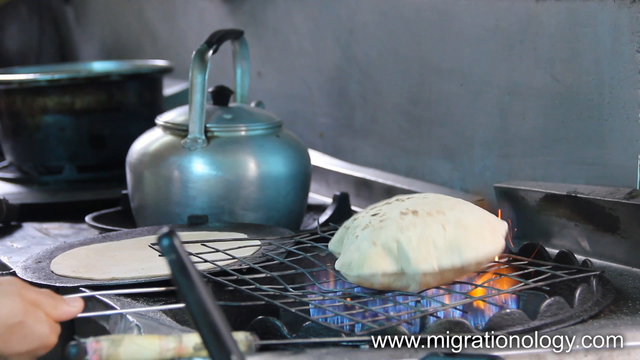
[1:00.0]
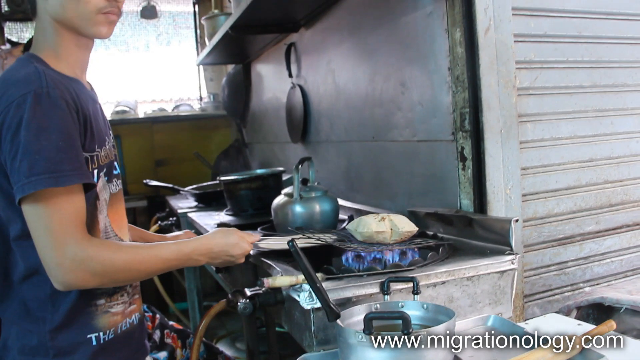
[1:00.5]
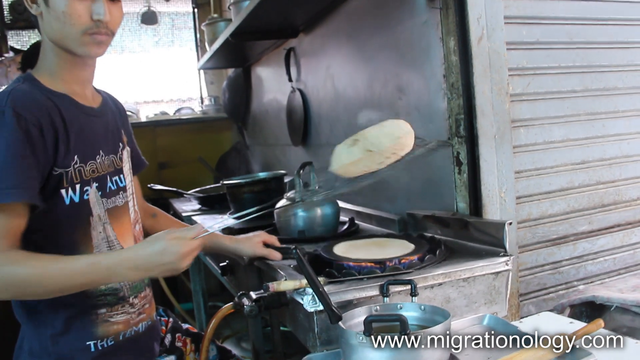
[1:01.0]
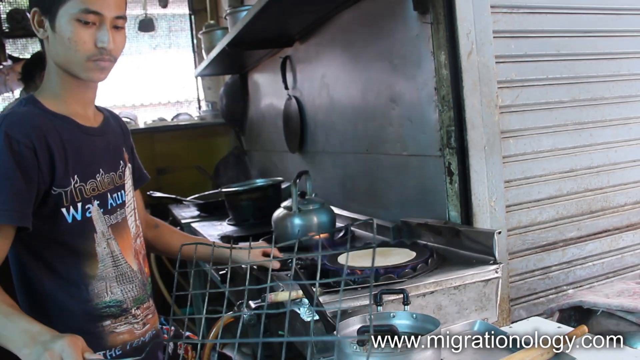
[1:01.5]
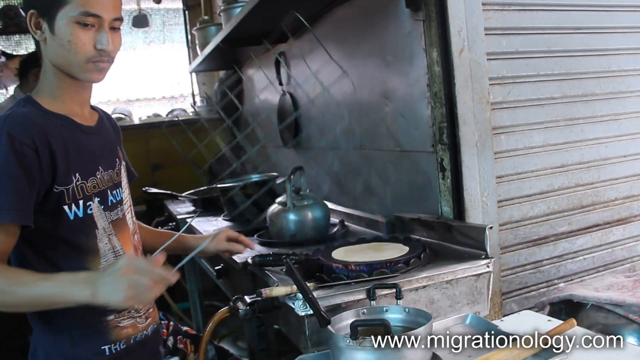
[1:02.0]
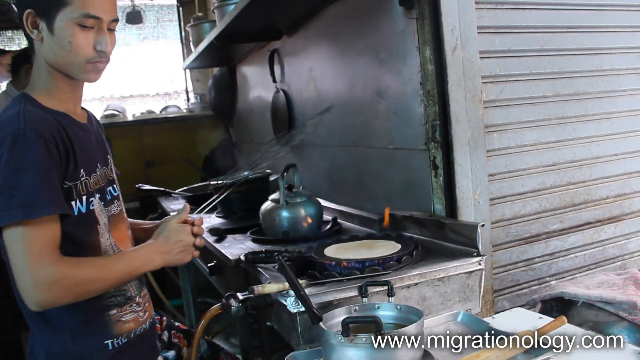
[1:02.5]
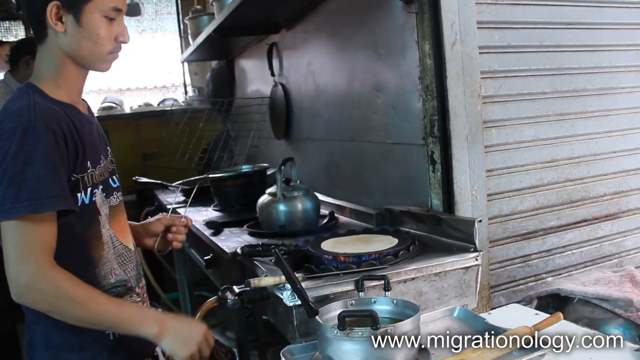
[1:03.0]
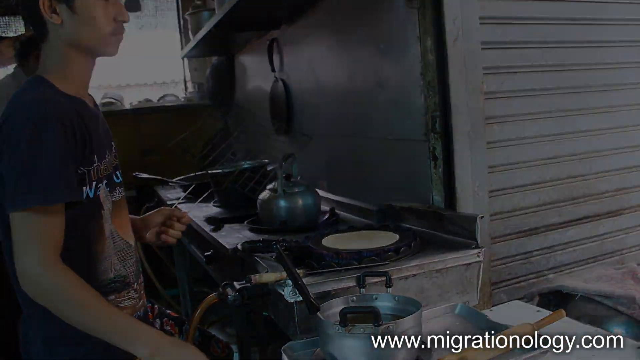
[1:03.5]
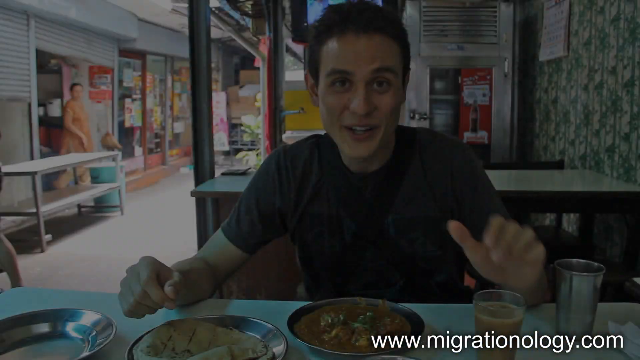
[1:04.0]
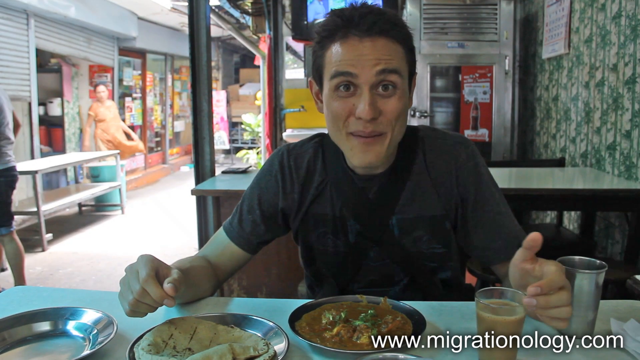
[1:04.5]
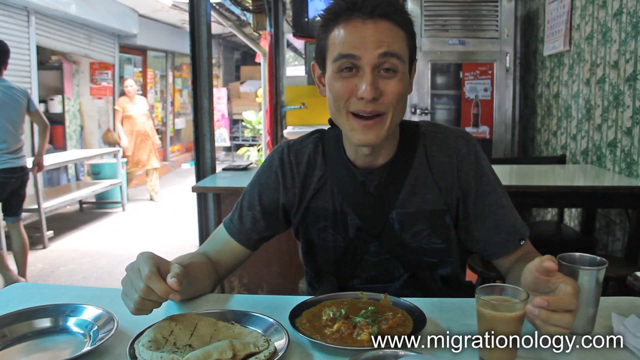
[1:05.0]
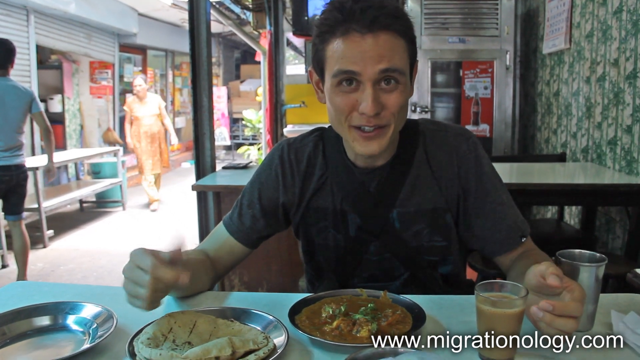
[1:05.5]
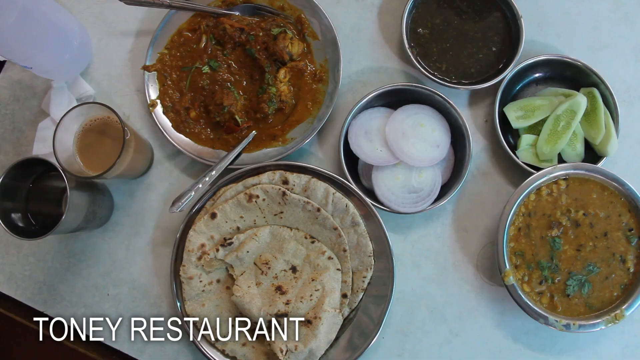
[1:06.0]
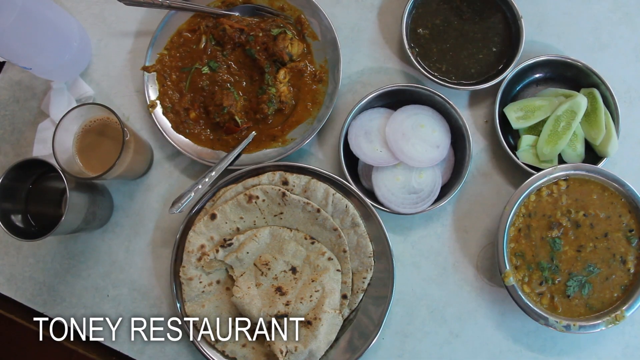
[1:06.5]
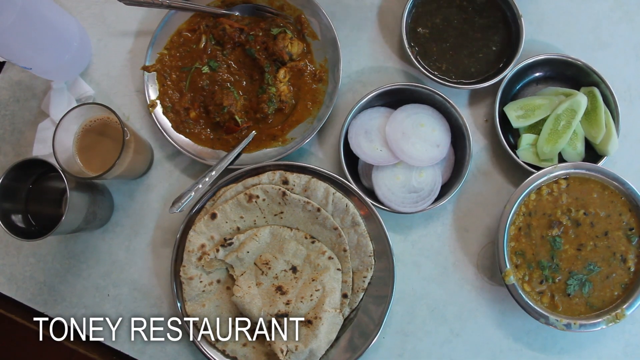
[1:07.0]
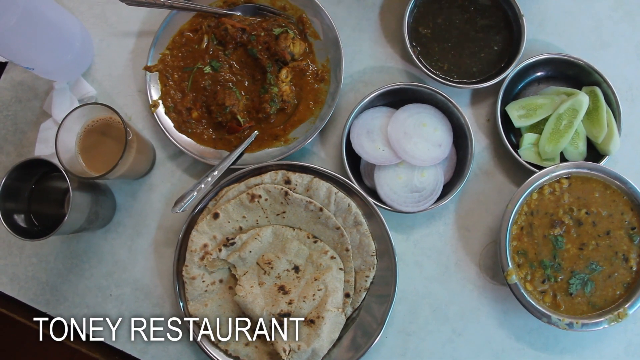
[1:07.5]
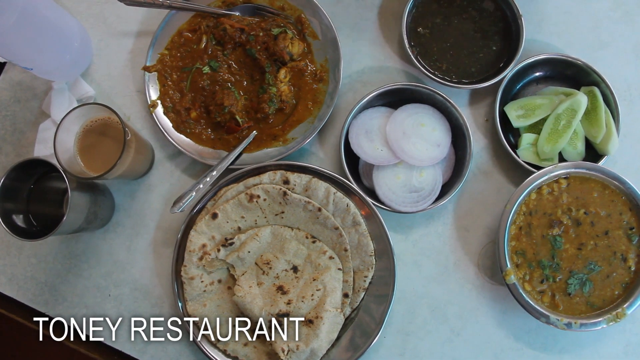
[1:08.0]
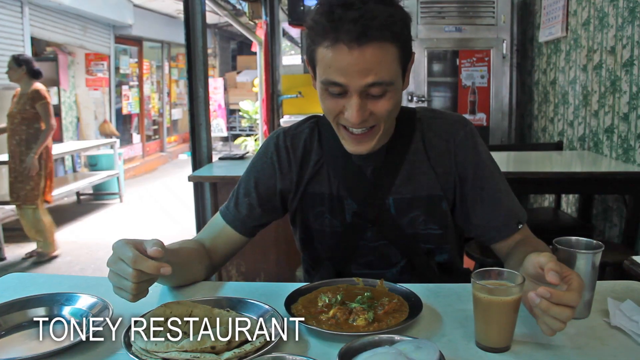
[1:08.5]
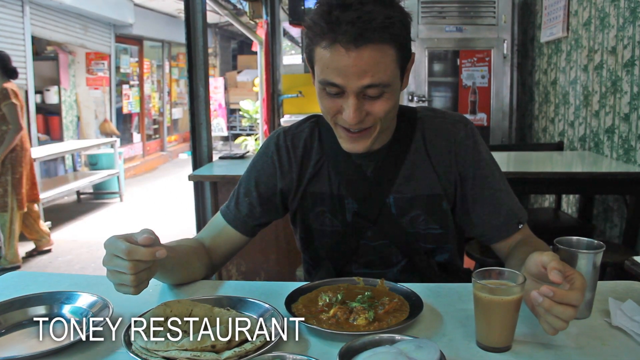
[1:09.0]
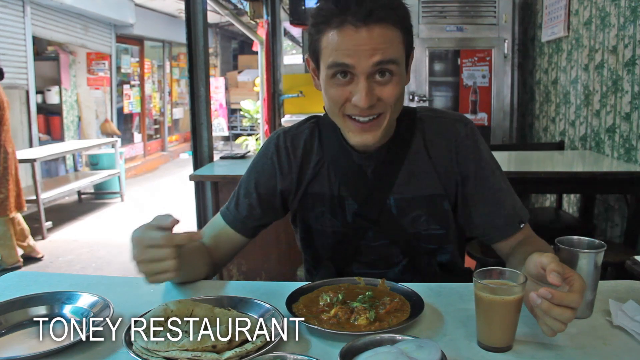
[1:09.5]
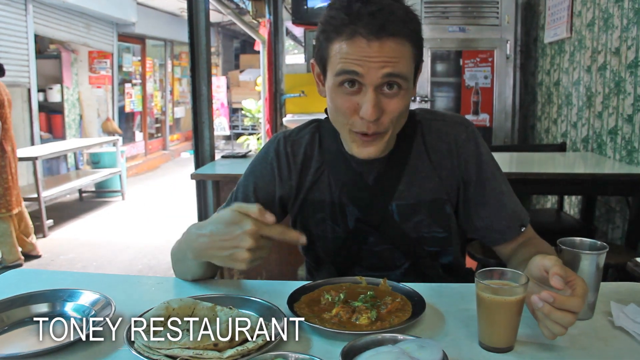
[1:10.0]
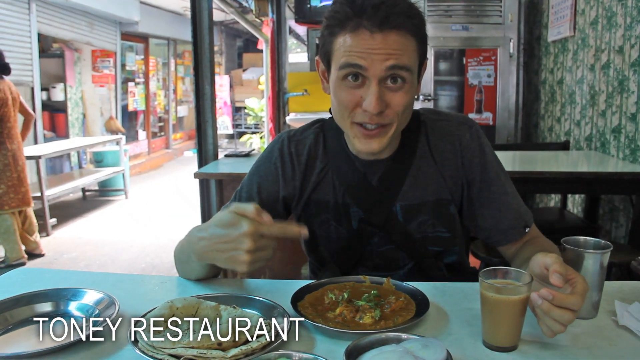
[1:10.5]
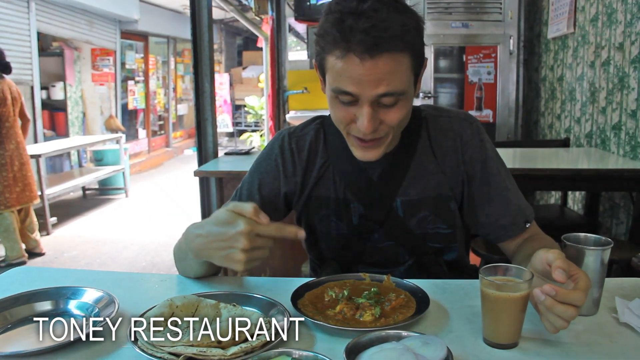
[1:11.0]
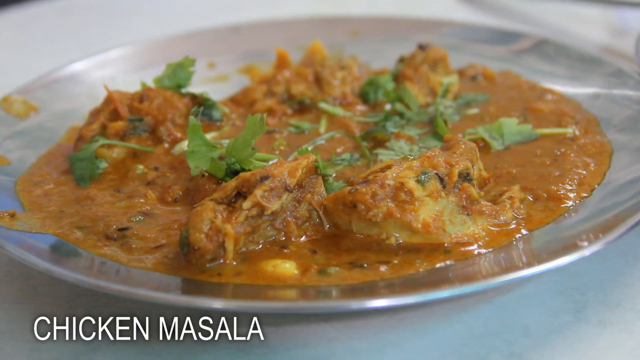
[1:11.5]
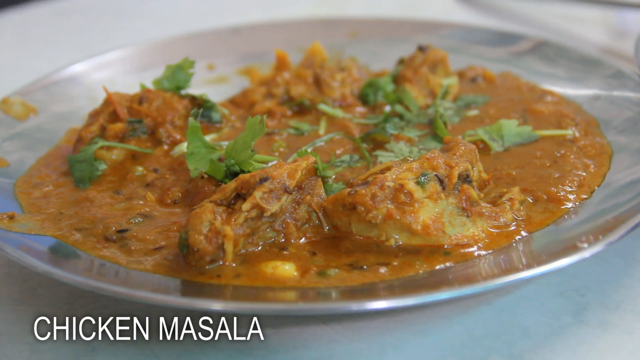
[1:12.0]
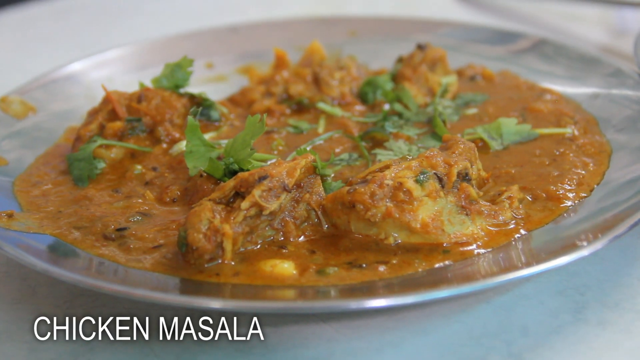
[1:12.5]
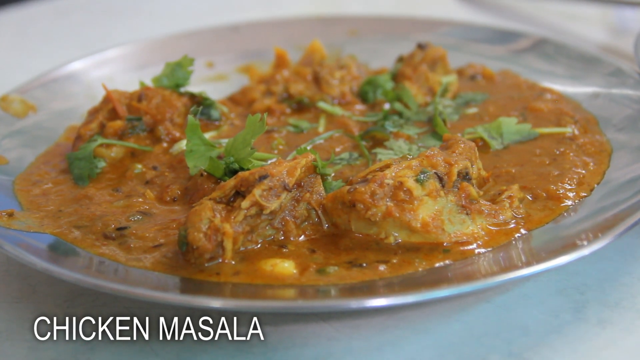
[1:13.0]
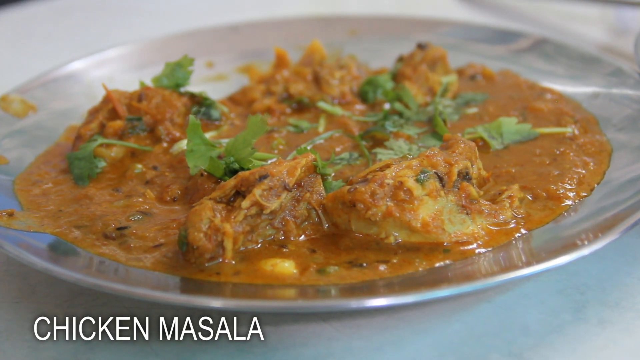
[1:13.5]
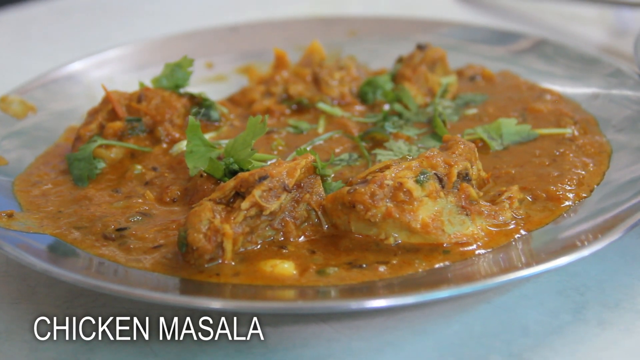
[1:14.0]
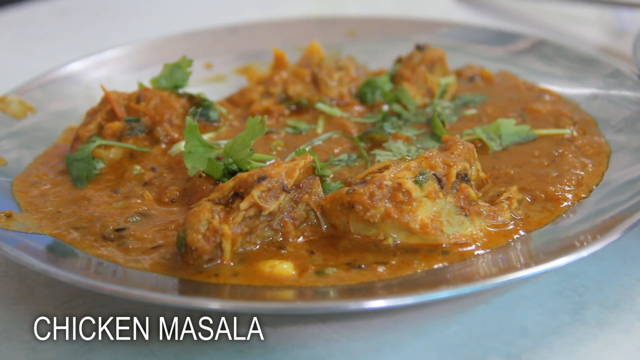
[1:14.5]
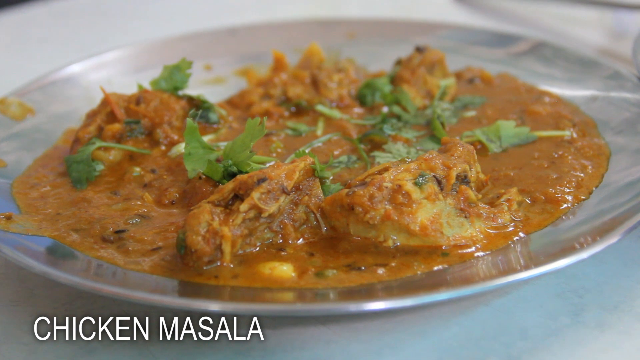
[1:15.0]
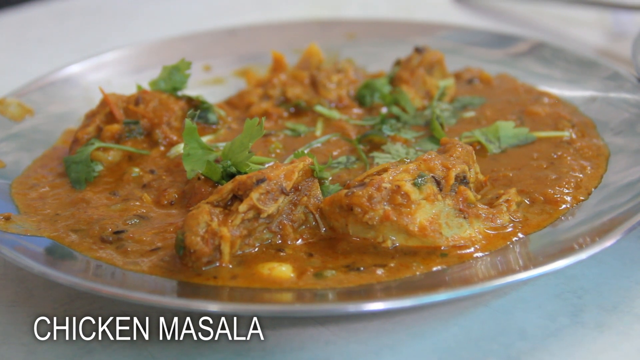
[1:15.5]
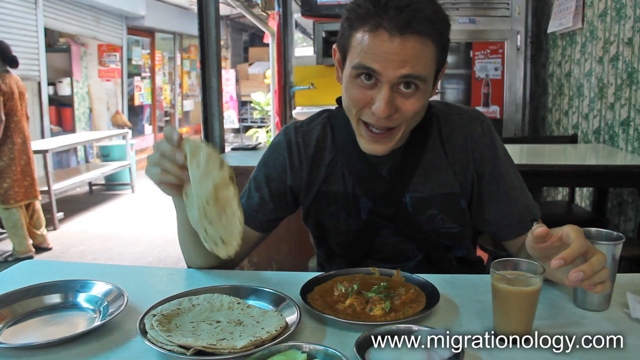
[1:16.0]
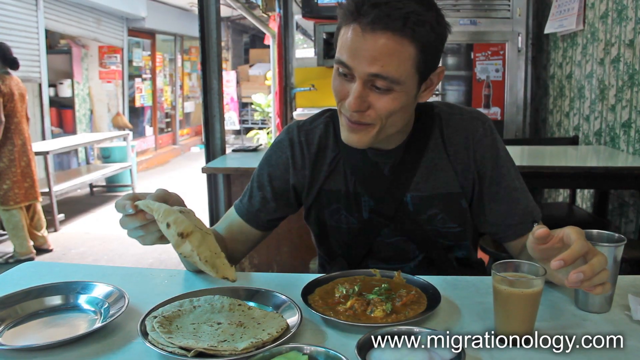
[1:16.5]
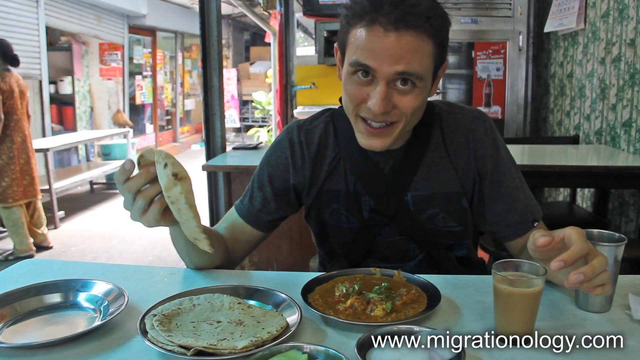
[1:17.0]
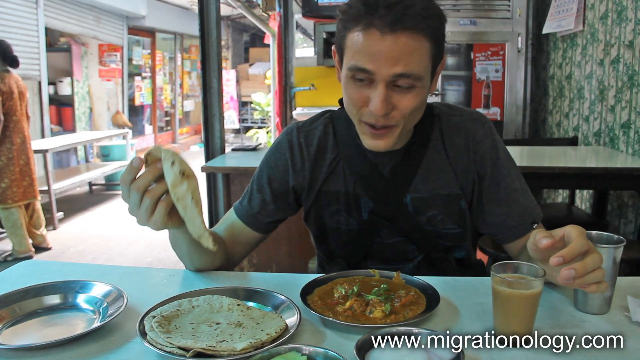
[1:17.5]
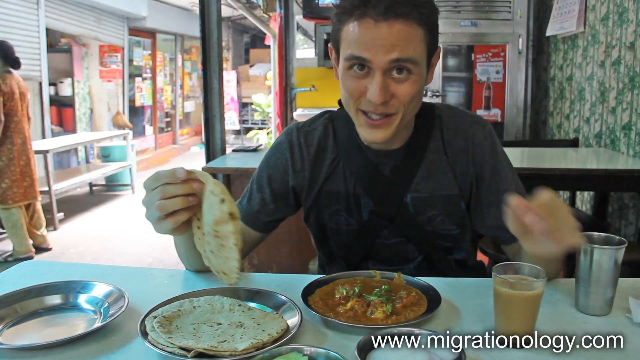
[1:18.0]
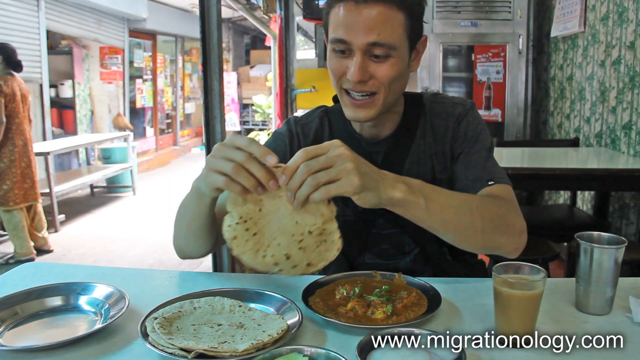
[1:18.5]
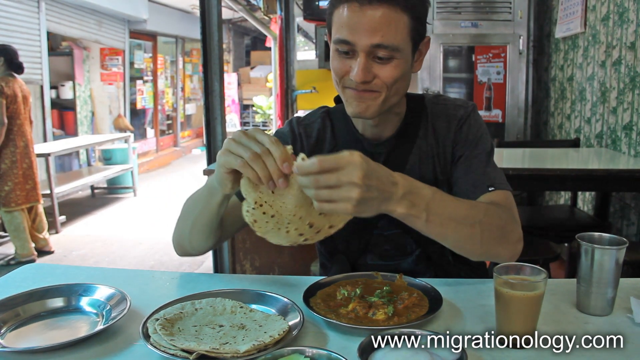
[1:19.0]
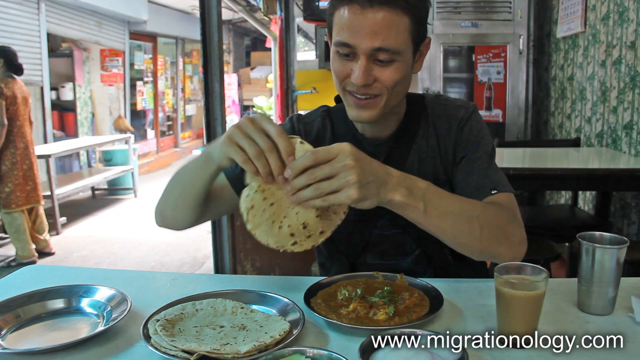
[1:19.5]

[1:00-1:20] The man places the flipped dough on a plate. A man in a t-shirt, apparently the vlogger, appears, about to eat, with a lot of food in front of him. Text reads "Tony restaurant". He points at the chicken masala, followed by a close-up of it, then holds some of the bread that was just being cooked as he gets ready to eat. In the middle of this, an overhead shot shows everything on the table: a drink, the chicken masala, the flatbread, some cucumbers, and maybe some onions or another garnish.